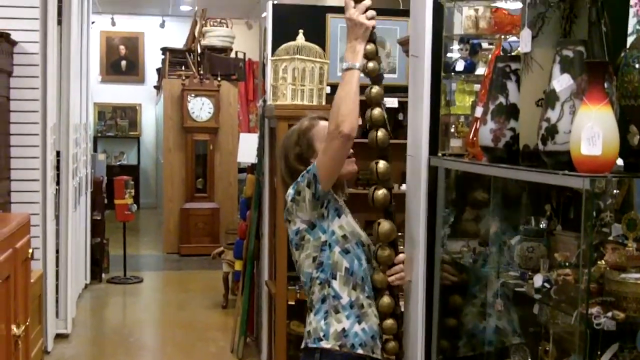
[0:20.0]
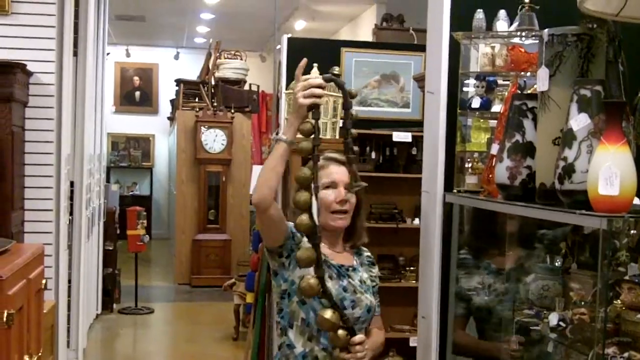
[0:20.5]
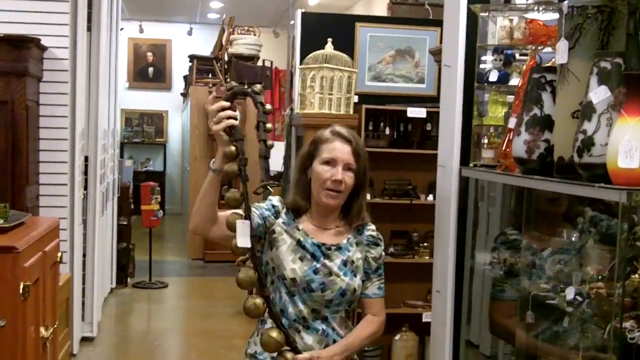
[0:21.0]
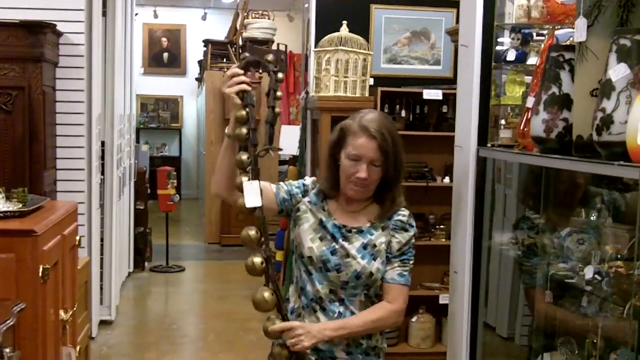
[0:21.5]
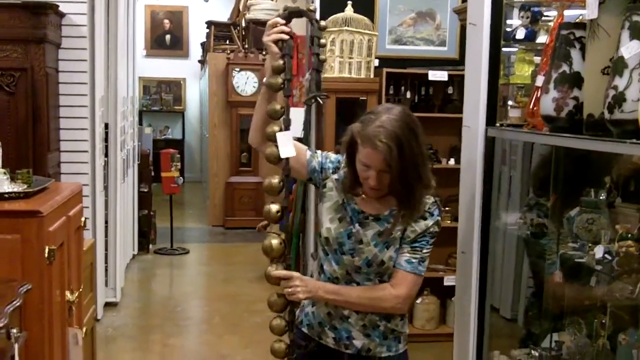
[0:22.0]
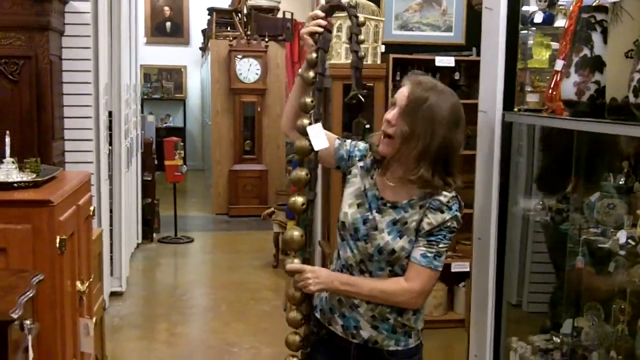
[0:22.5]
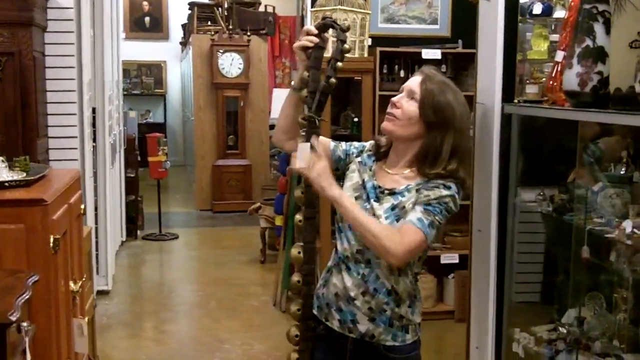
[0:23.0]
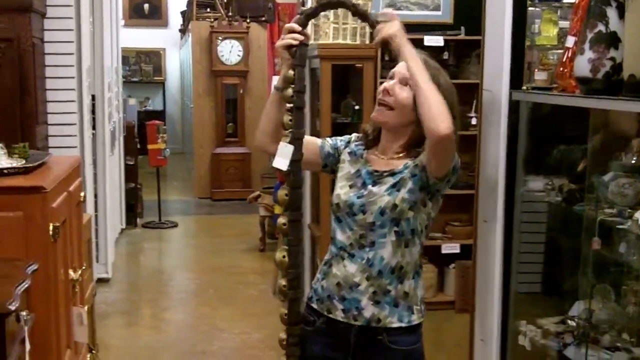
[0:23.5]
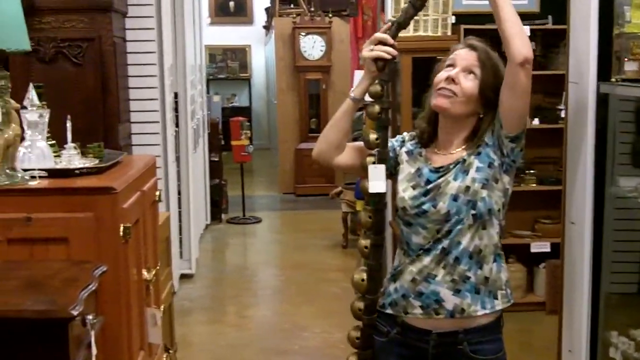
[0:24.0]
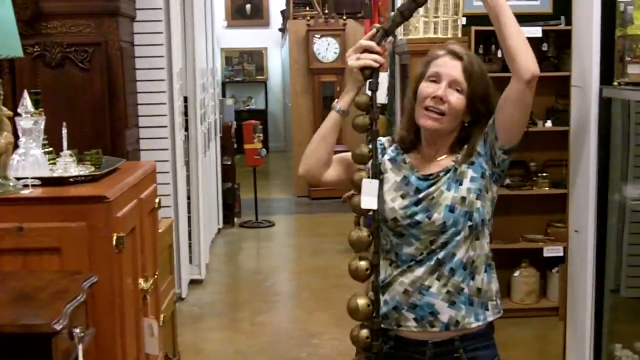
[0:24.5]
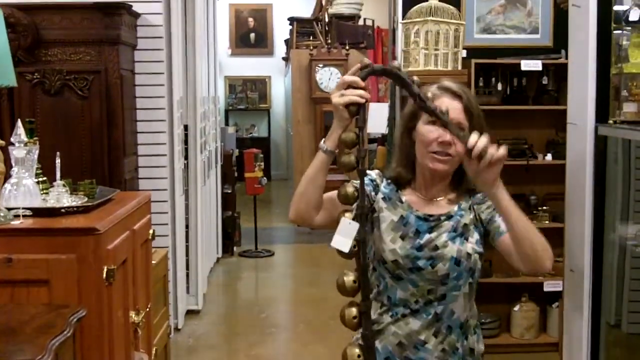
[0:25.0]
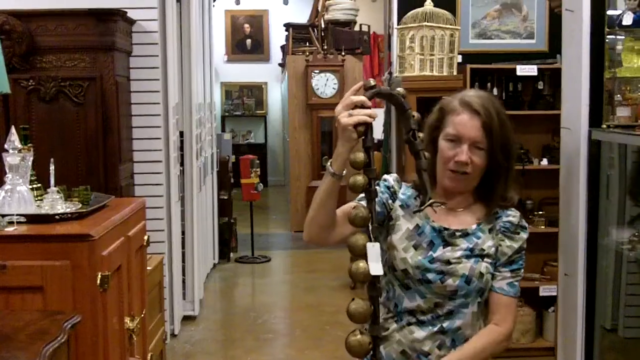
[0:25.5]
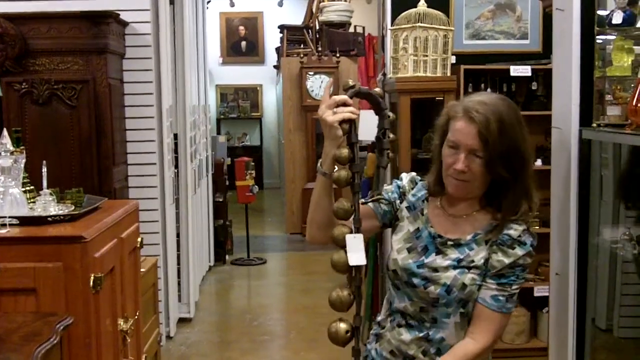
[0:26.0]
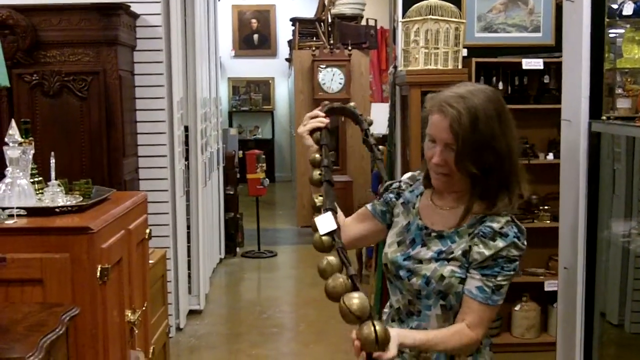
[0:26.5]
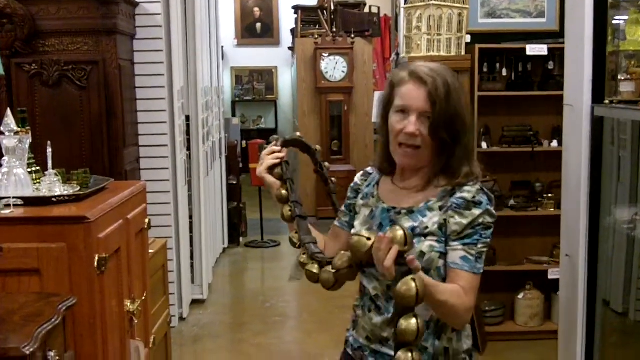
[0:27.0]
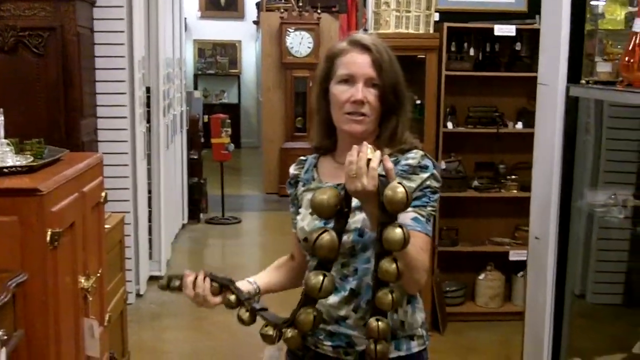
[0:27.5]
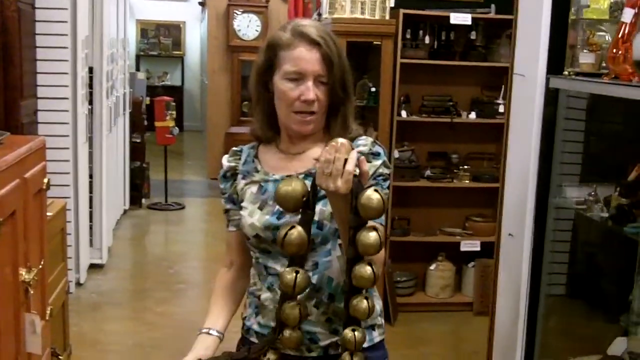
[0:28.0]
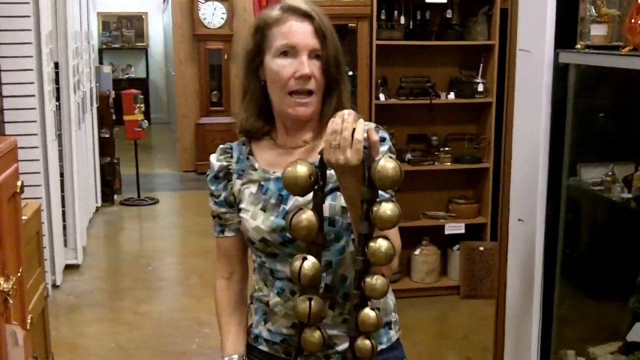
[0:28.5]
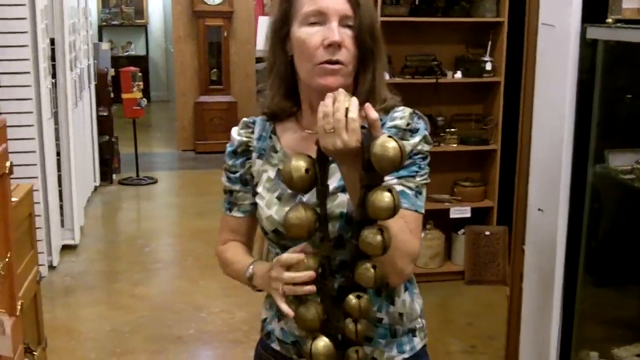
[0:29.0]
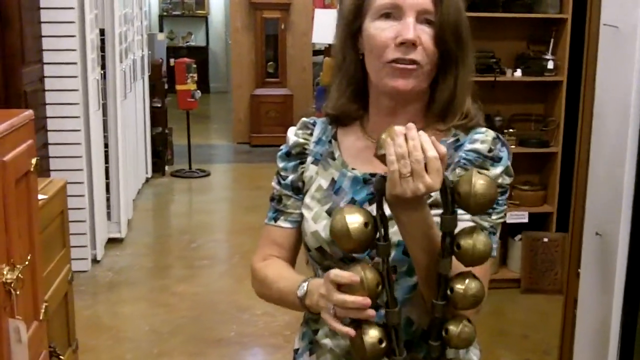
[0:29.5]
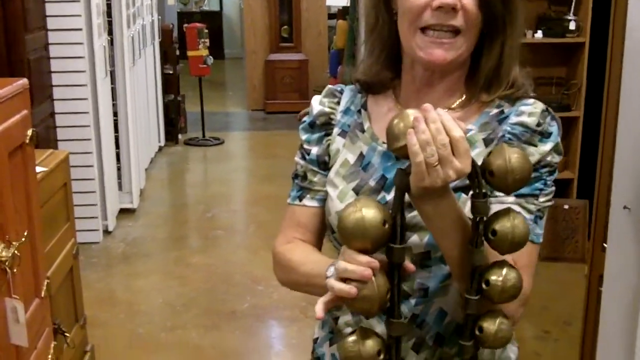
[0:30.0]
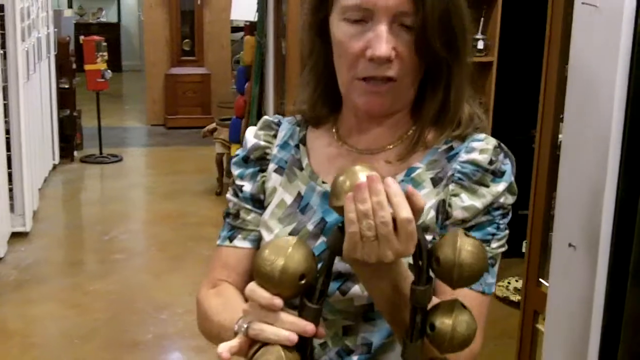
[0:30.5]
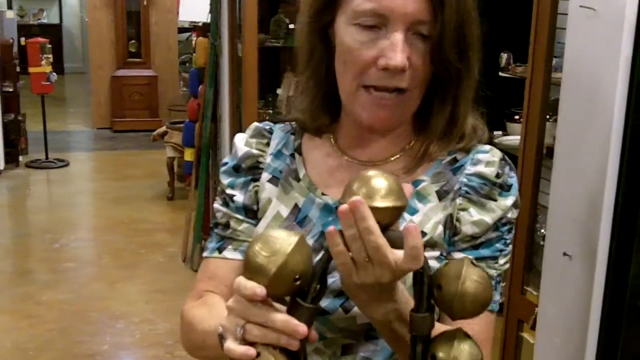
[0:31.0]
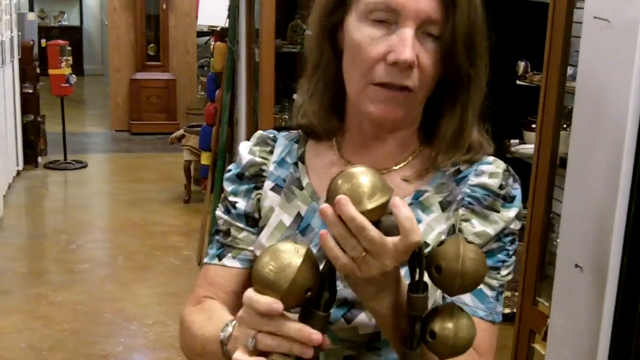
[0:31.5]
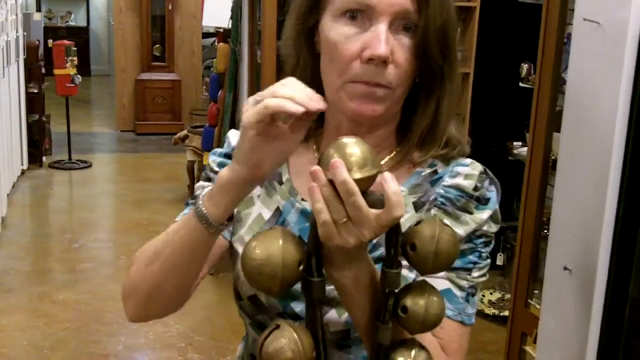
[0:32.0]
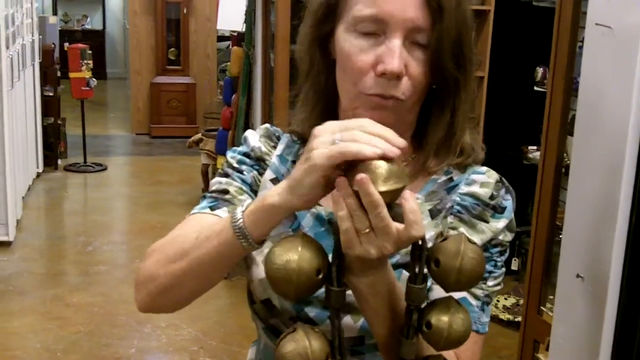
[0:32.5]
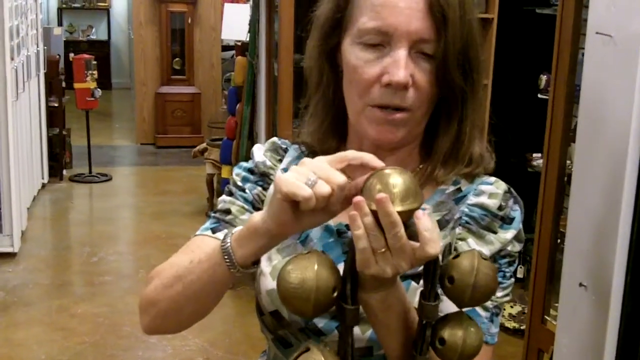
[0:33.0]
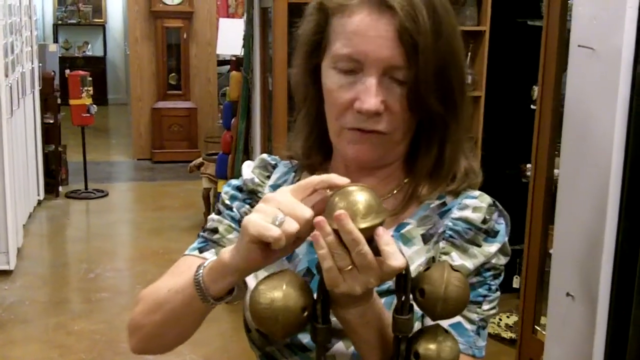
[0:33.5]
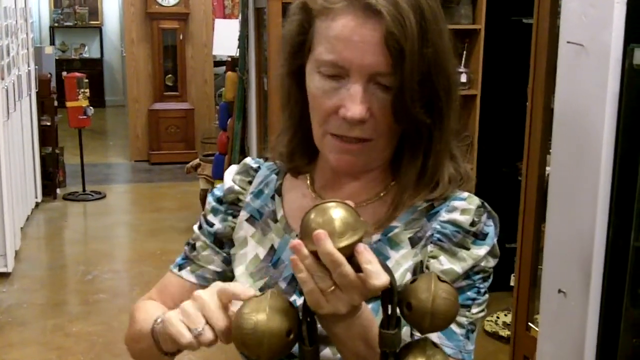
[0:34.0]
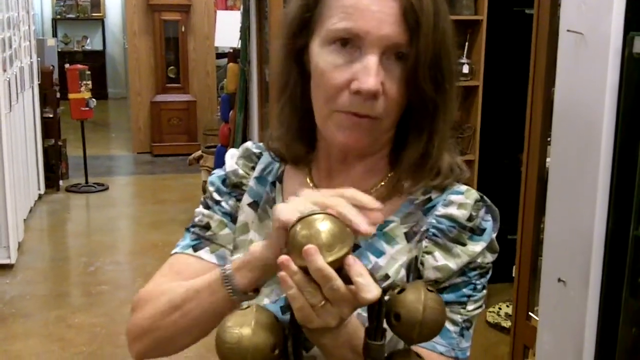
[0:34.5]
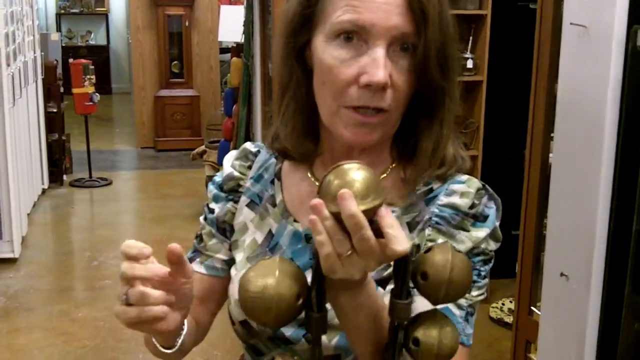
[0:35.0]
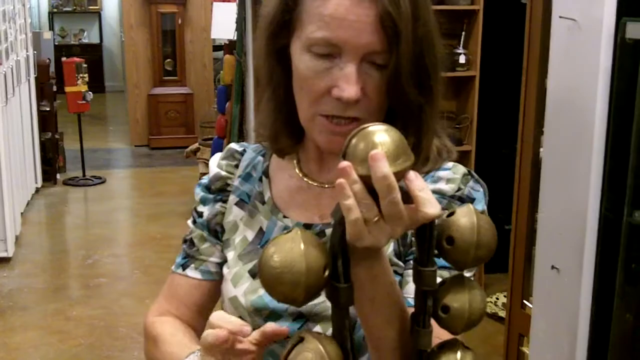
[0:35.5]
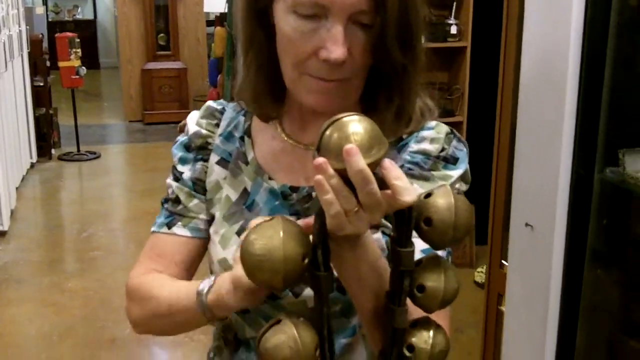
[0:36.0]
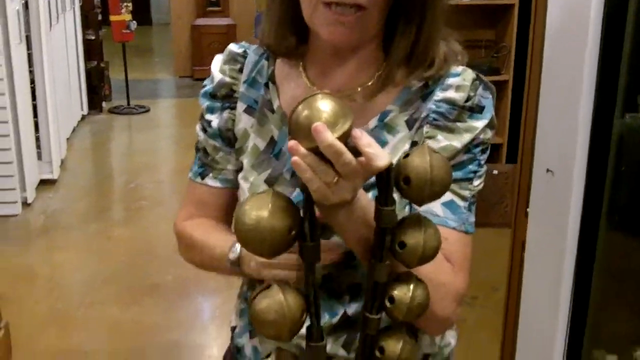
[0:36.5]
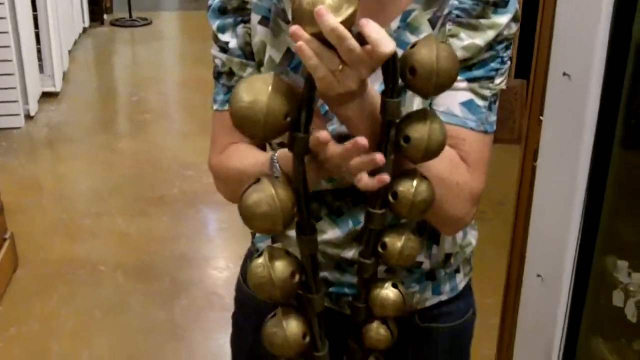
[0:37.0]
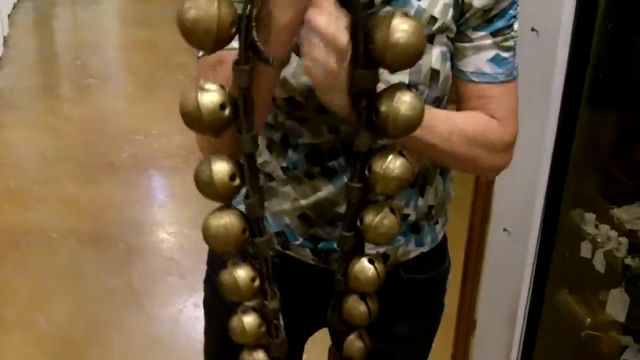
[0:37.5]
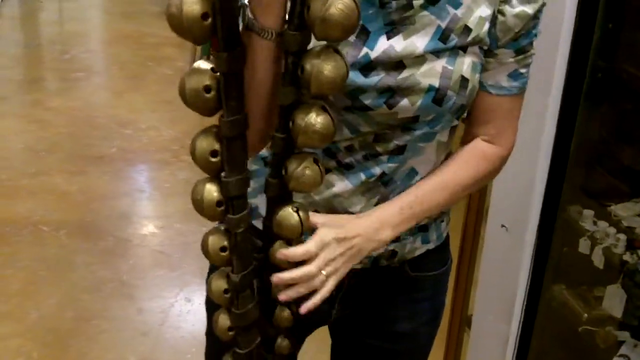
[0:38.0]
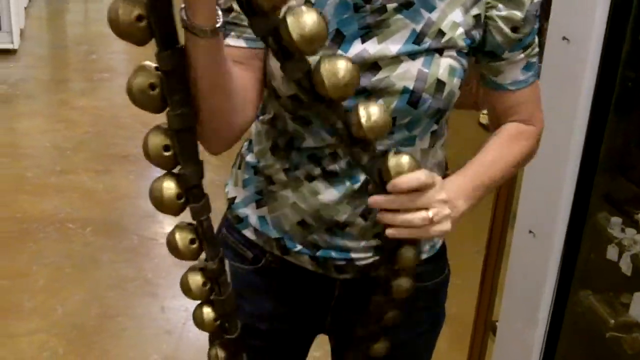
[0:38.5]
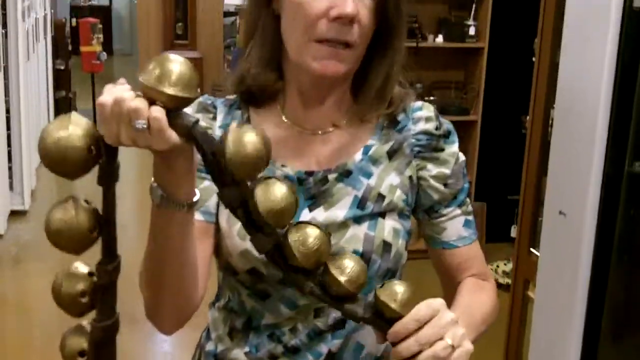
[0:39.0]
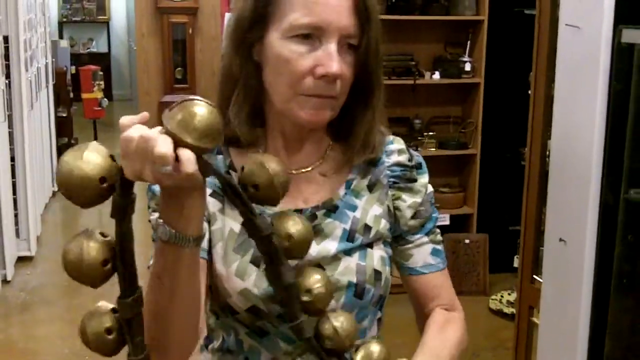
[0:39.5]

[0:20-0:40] A woman with brown hair, wearing a floral blue top, holds a belt with metal balls on it. She singles out one metal ball as she explains, and jiggles it at the end. She seems to be explaining something to the camera. The antique shop holds a lot of things. A glass cabinet to her right reflects a figure and has a lot of things inside, with a red and yellow vase on top. Behind her are a painting on the wall, a long clock, a red hose-like structure with black wood, and various other things. On her left is a brown cabinet with gold handles and a deeper brown structure on it.